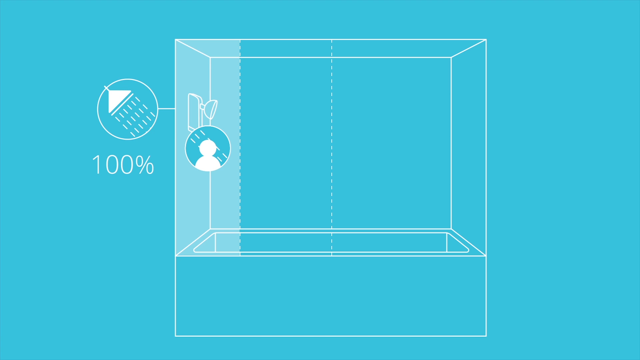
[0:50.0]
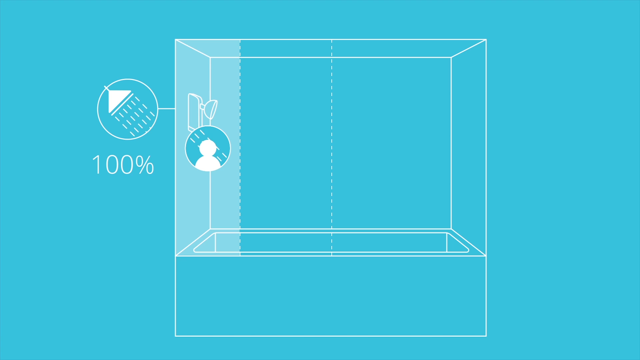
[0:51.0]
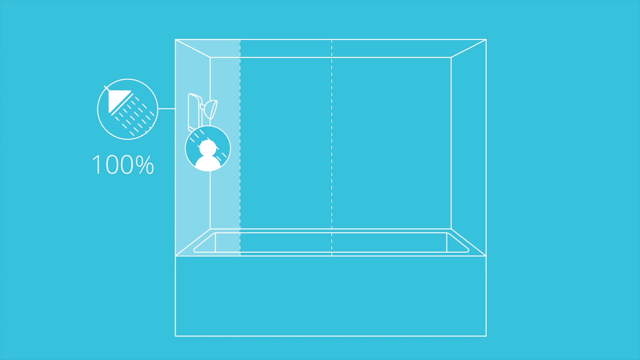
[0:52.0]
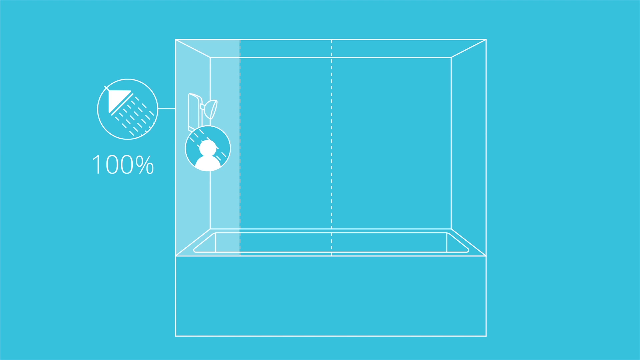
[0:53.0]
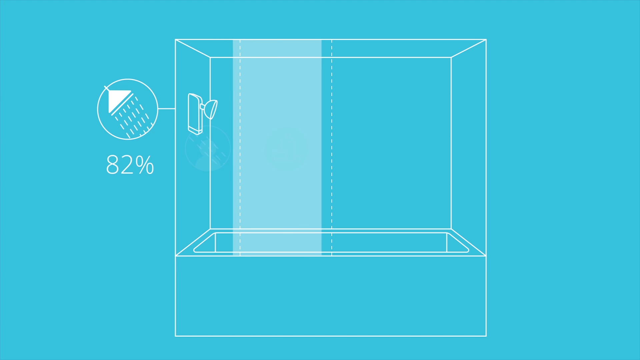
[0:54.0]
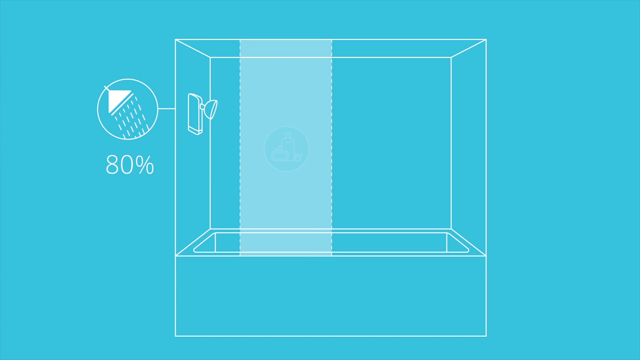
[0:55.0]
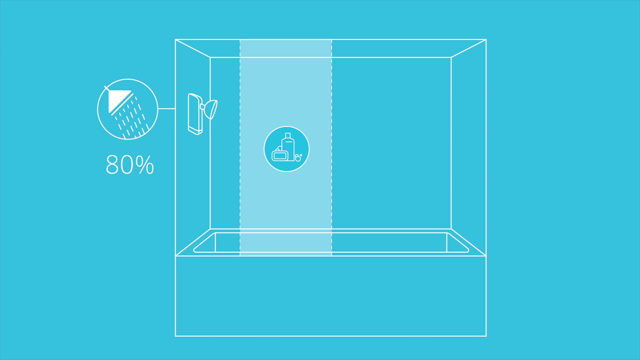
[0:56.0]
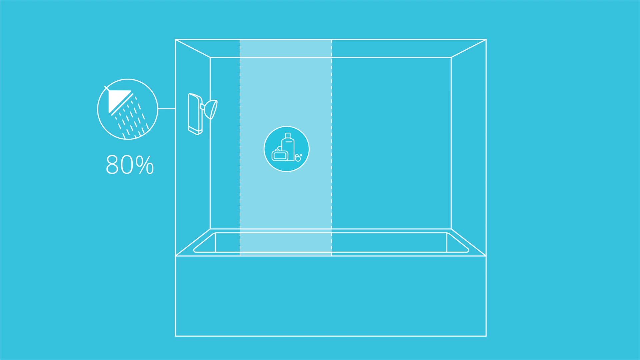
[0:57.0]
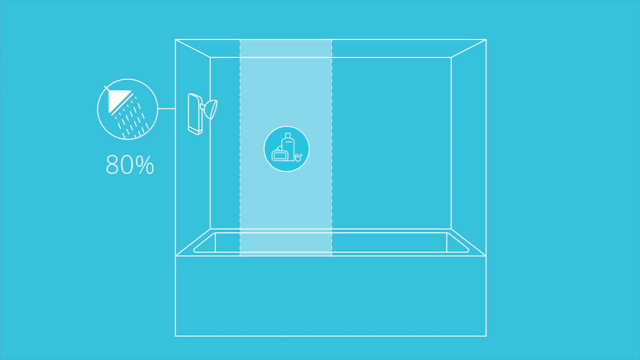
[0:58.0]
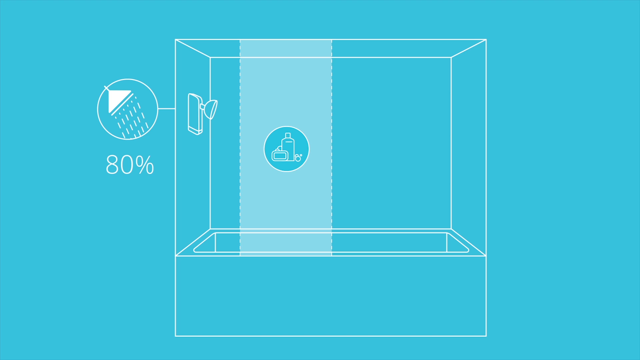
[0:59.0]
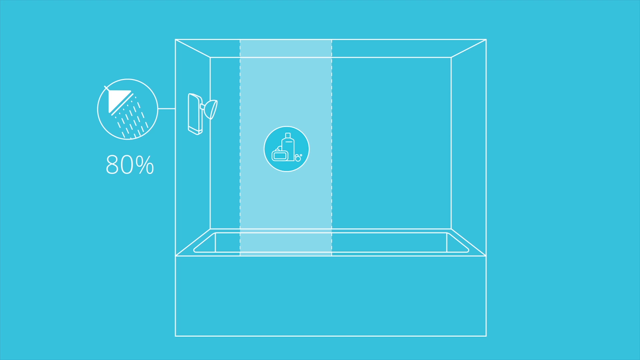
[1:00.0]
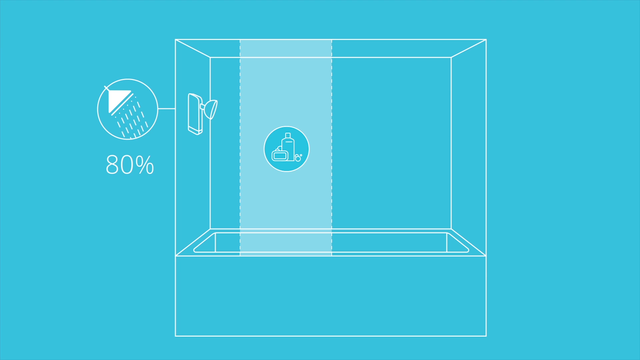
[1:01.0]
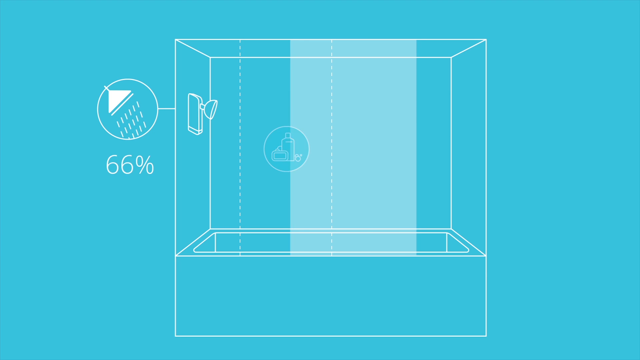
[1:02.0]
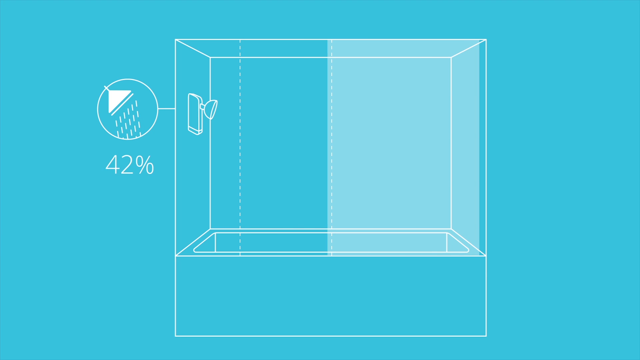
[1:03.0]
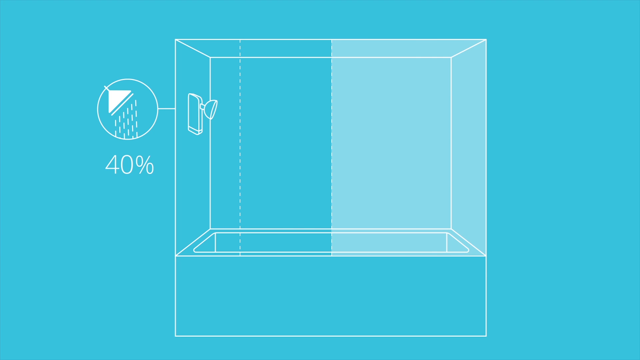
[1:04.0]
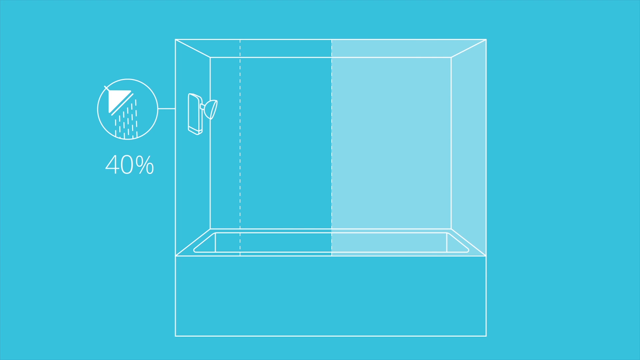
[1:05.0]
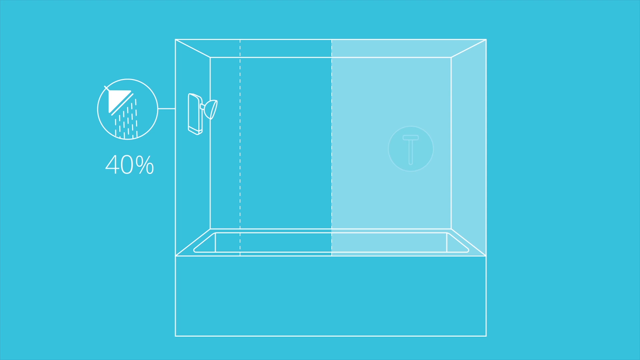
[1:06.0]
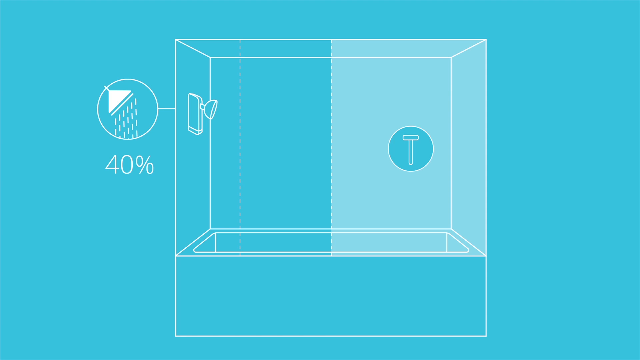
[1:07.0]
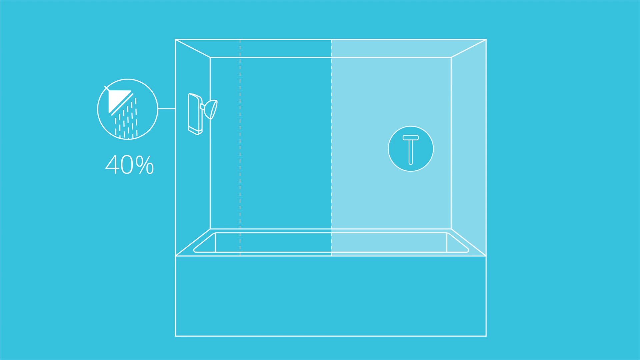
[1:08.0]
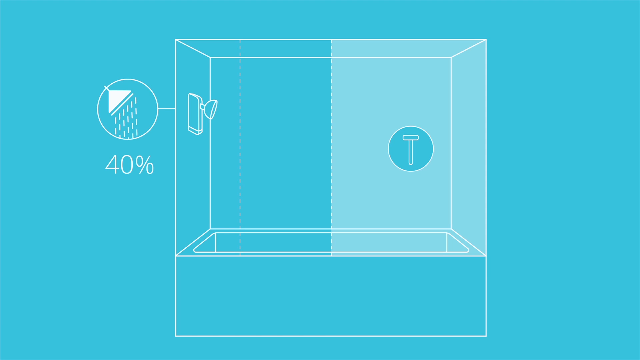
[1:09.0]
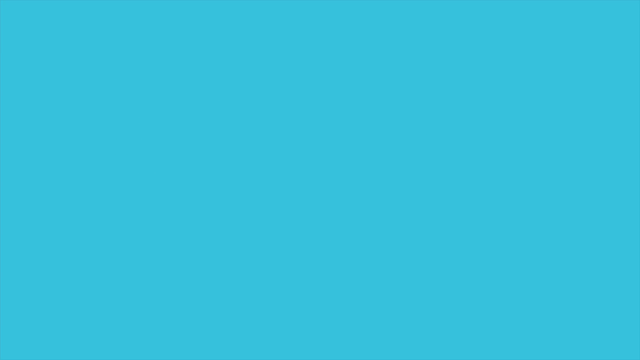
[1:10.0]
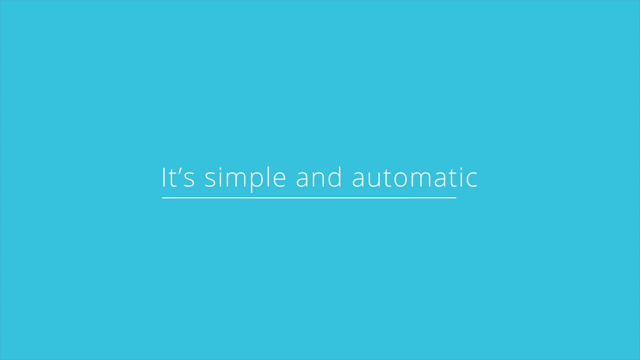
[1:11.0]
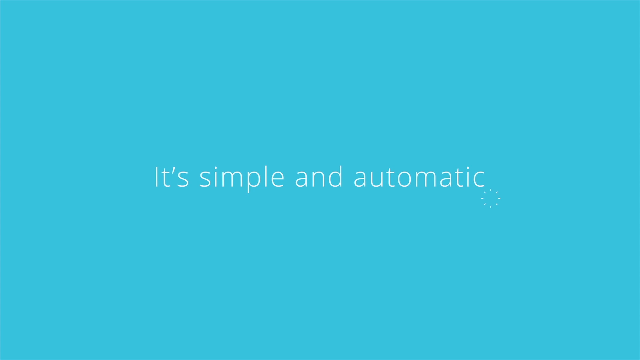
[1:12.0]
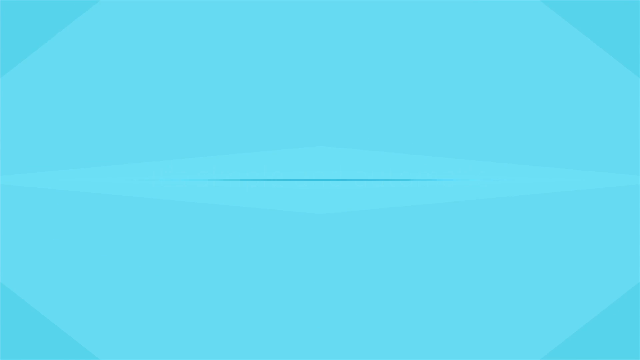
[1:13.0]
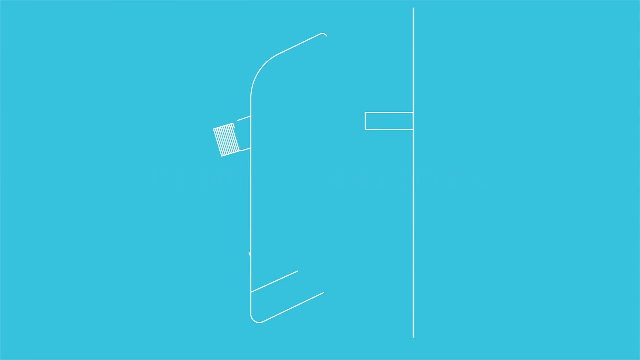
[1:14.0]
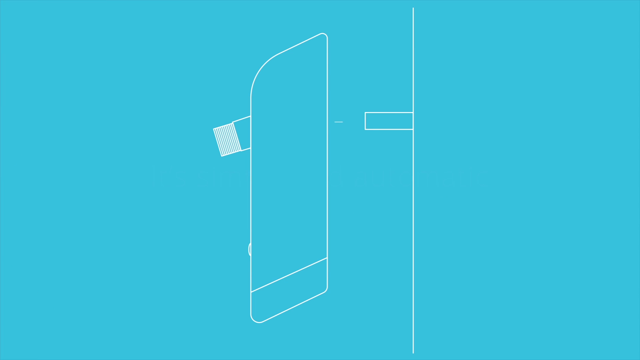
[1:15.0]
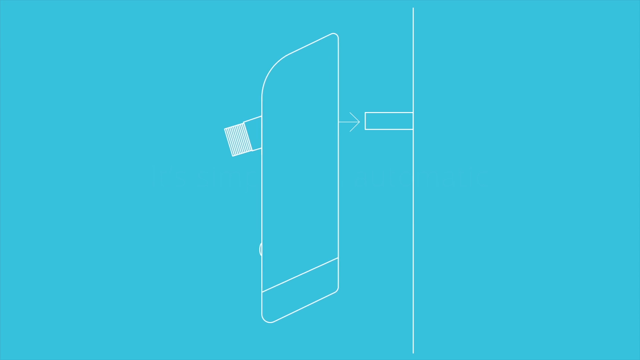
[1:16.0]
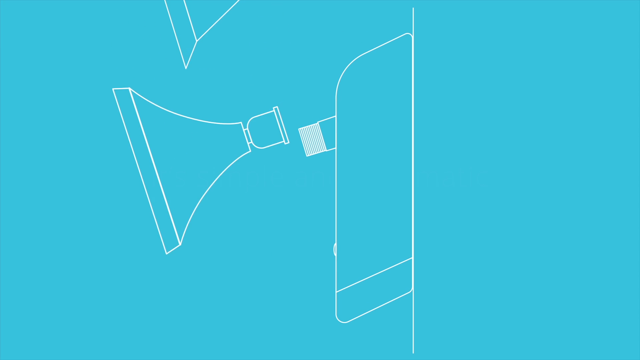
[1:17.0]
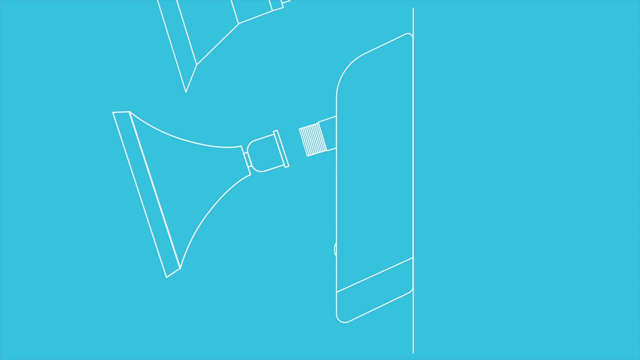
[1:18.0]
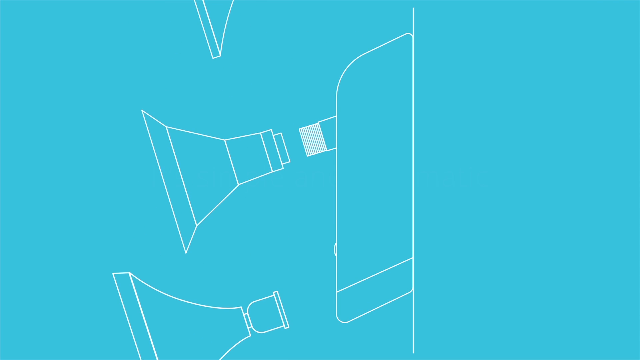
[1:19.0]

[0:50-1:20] A diagram of a bath, drawn with white lines, is on a sea green background. Above the bath is a diagram of a shower head, which appears to be the product being sold. Attached to the shower head is a diagram of a shower, with the text "100%" below it. The focus then shifts to a different part of the bath, and the numeric value on the left-hand side changes from 100% to 80%. The focus shifts further into the bath, and the value on the left-hand side changes from 80% to 40%; an icon of a razor appears as this happens. Text then states "it's simple and automatic". More diagrams follow, this time appearing to show different shower heads.